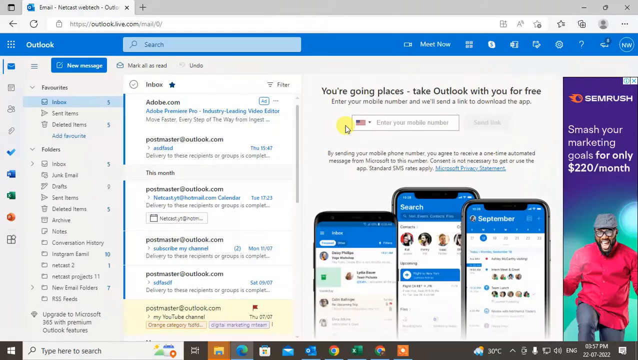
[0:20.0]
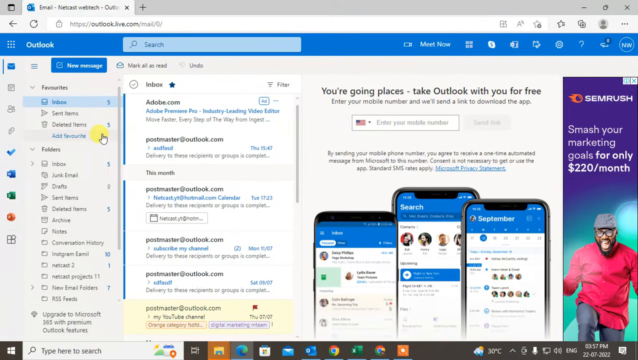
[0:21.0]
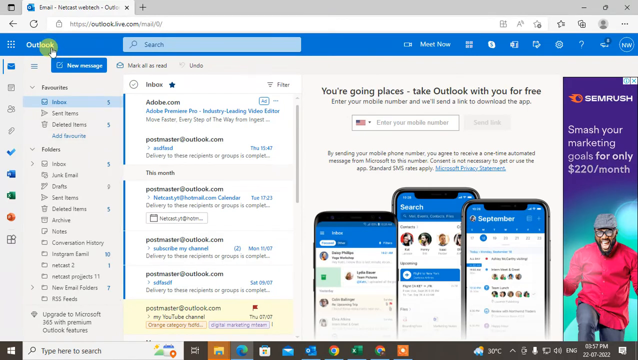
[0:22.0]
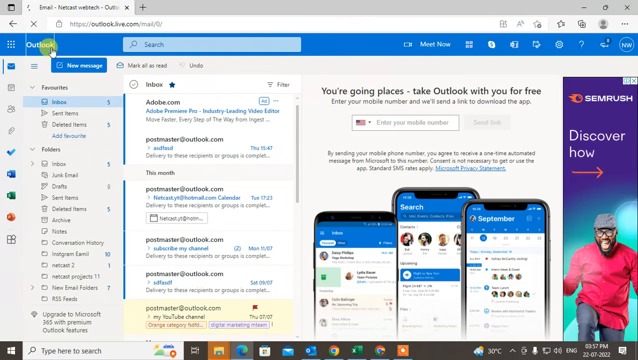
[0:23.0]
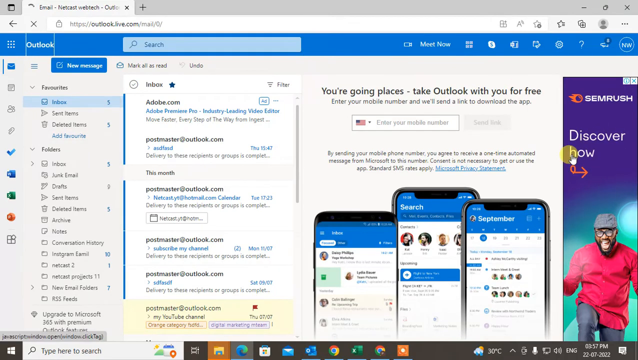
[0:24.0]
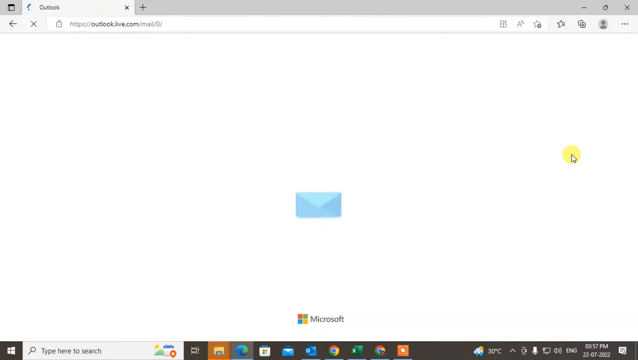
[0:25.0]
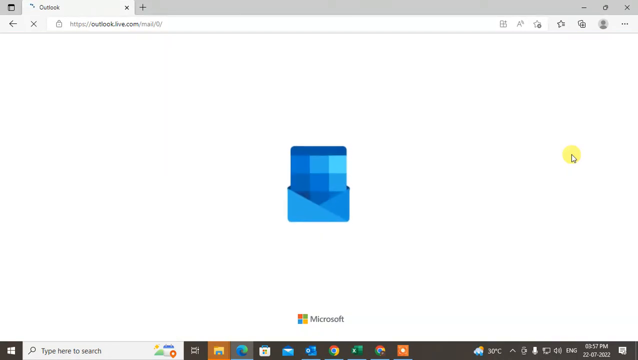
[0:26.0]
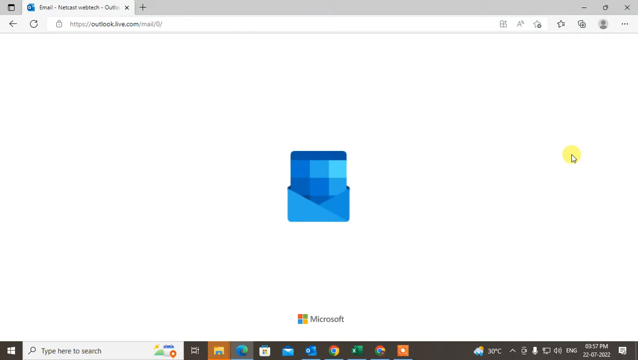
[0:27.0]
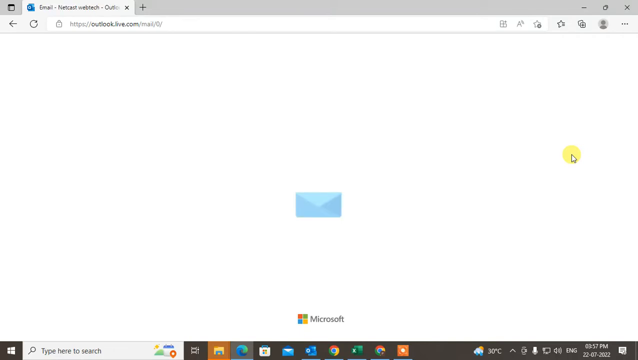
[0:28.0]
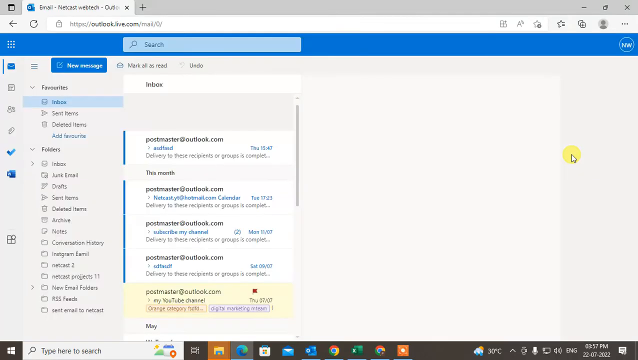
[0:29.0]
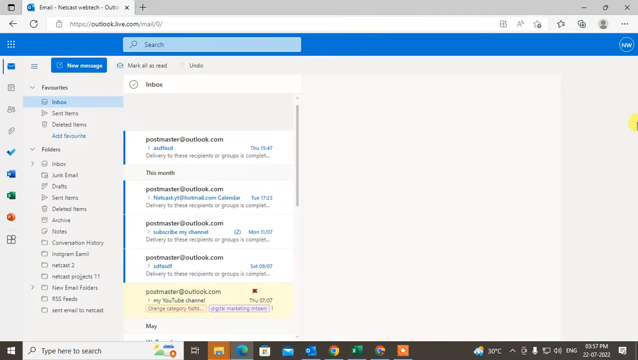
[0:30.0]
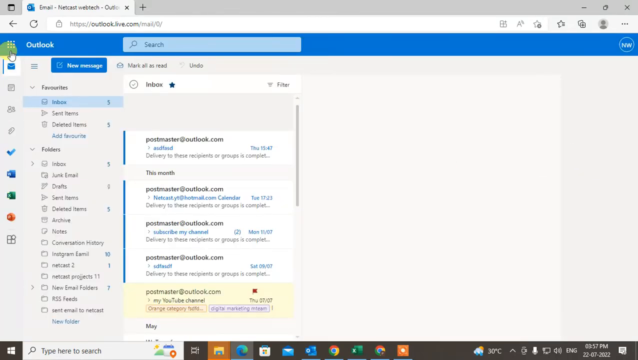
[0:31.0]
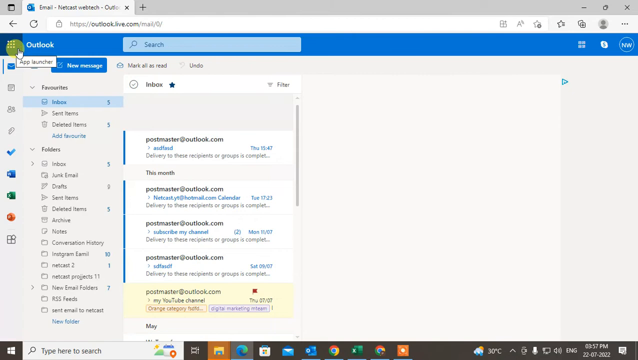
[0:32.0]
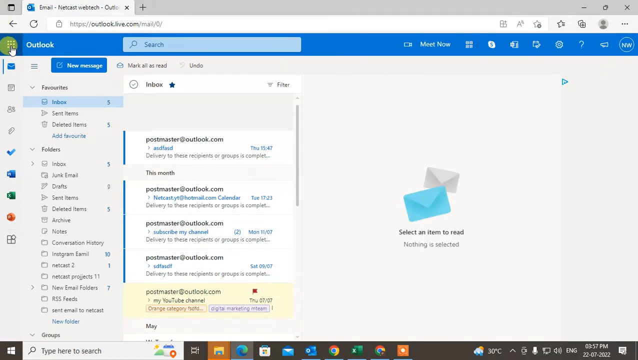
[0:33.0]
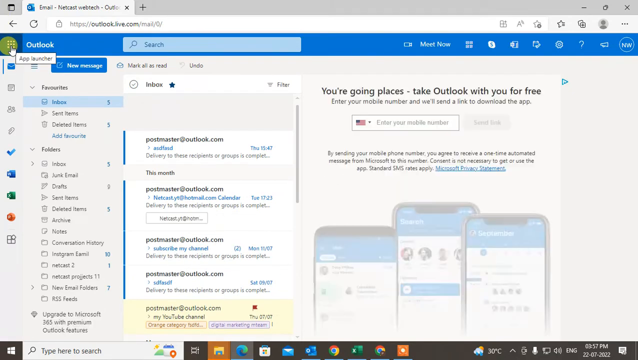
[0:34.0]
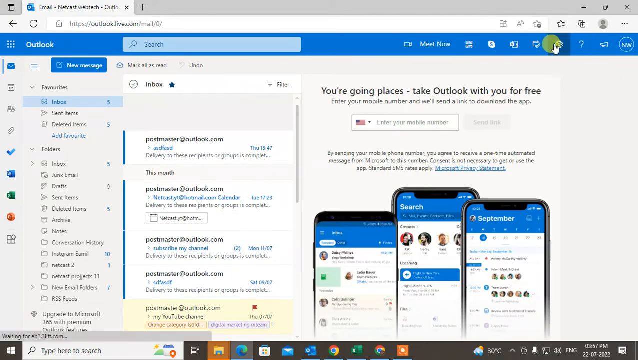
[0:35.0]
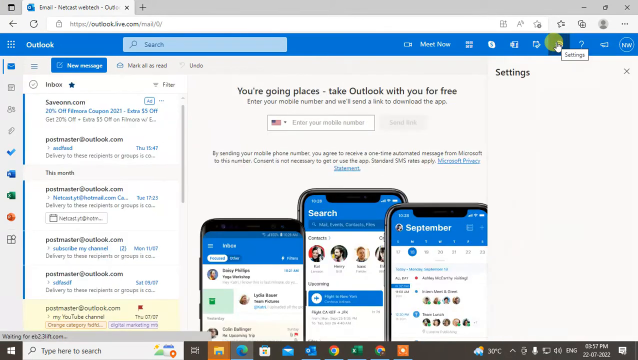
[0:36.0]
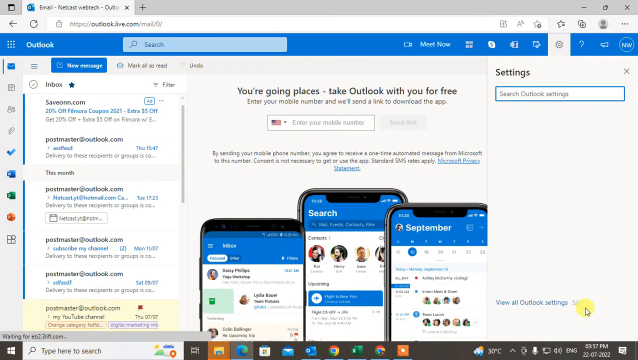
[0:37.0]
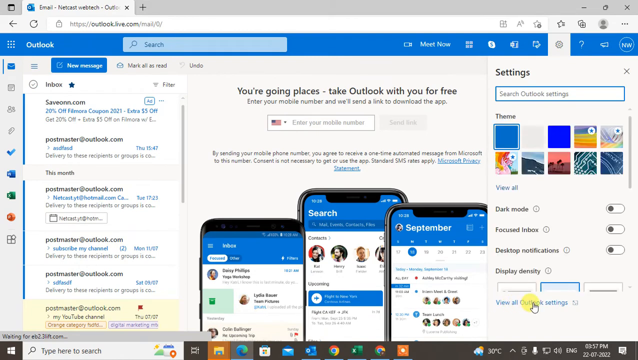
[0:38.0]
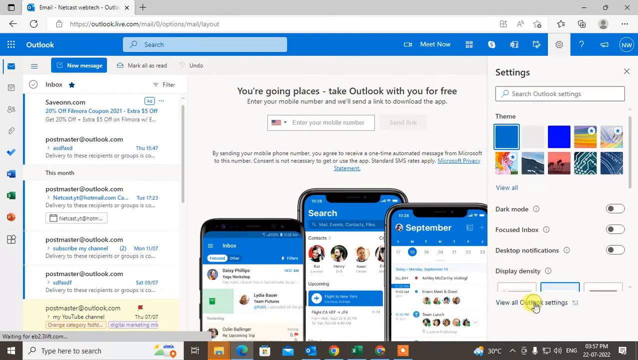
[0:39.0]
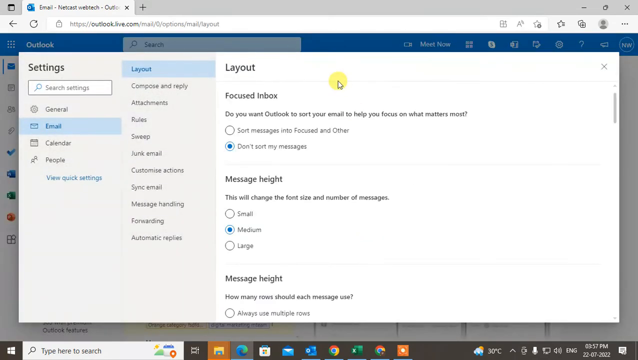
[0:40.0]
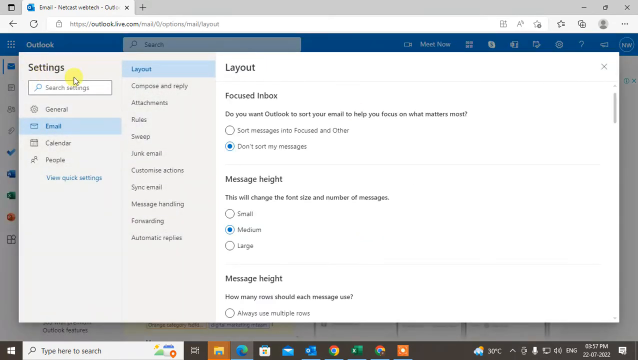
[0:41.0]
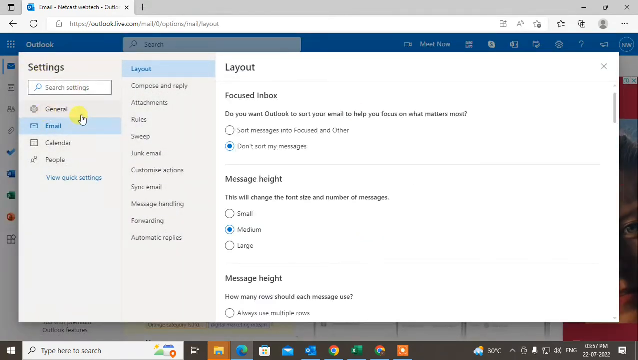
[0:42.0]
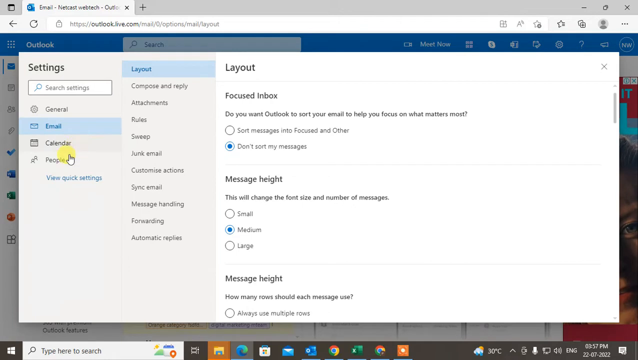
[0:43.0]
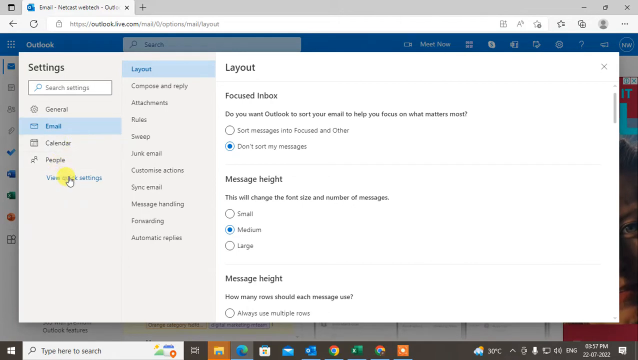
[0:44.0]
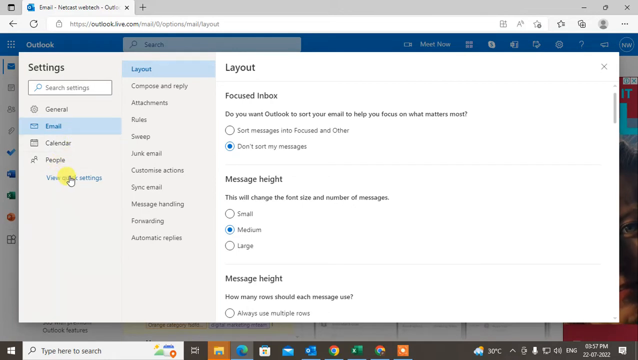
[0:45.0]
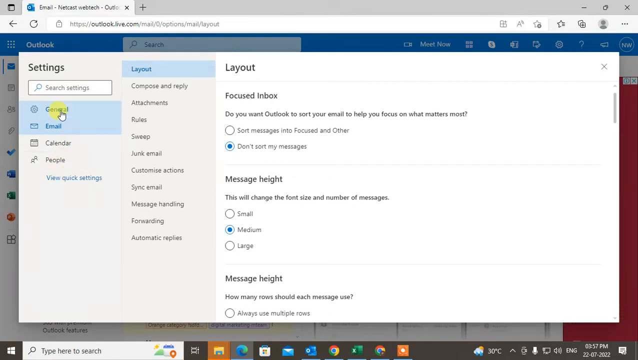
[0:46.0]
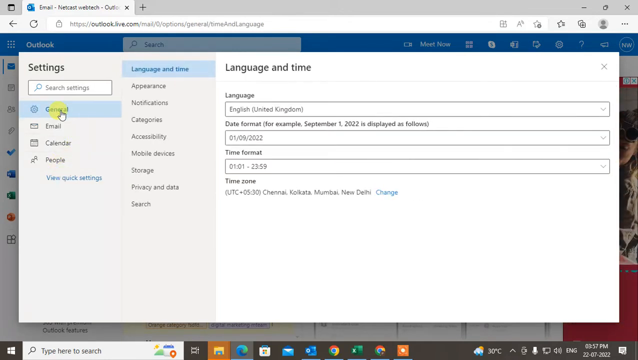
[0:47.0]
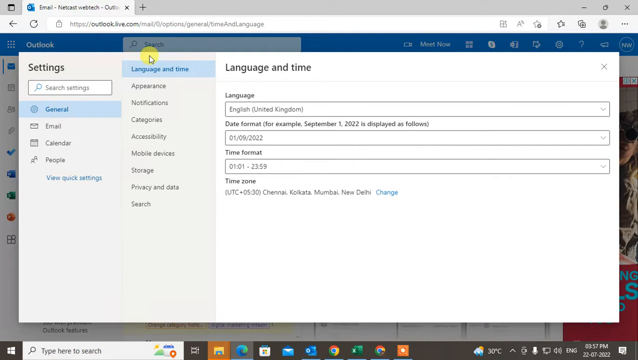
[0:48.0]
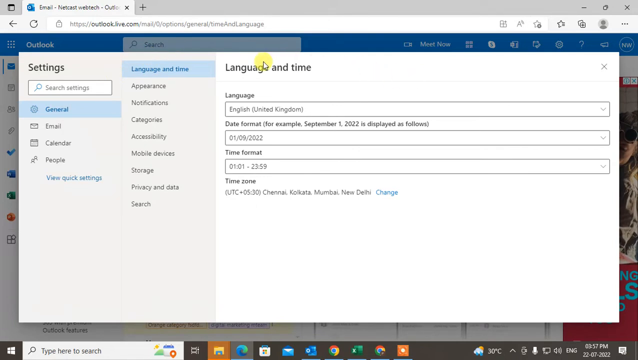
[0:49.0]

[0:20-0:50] The Outlook email program is open to full screen. The left pane shows all the different options, with Favorites open, and the Inbox is in the middle. Across the majority of the screen it says "you're going places. Take Outlook with you for free." It is not clear whether this is an ad or email content. At the far right is an advertisement. The cursor points to Outlook and the view repopulates. The nine dots in the upper left corner are clicked and the emails refresh. Then the cursor moves to the right side of the screen and clicks Settings. Within Settings, Layout is opened and its different options are shown, and then the General tab is opened.